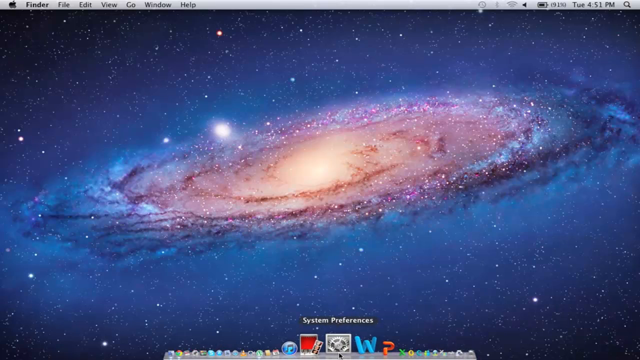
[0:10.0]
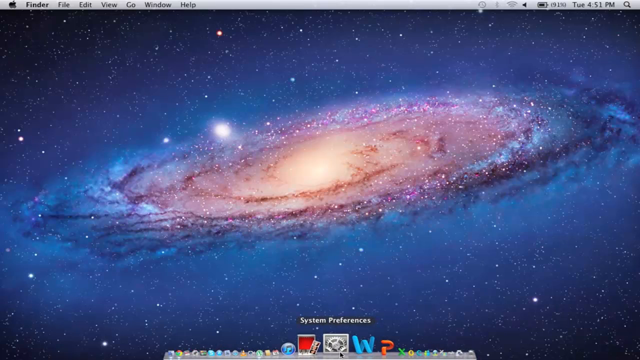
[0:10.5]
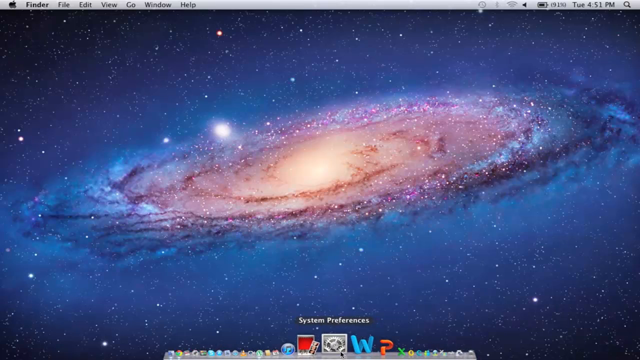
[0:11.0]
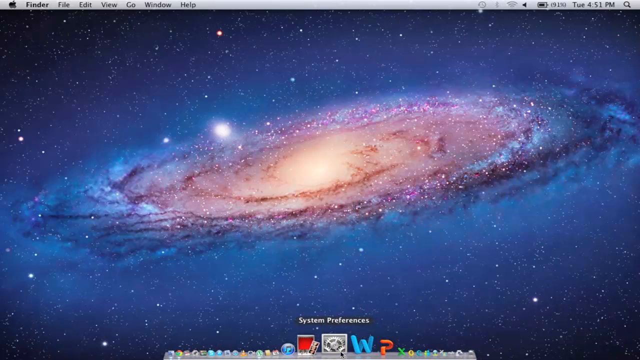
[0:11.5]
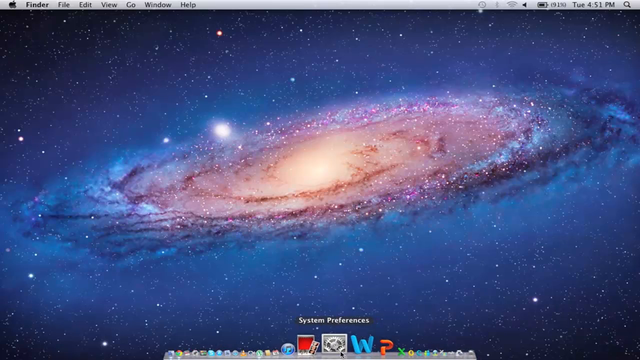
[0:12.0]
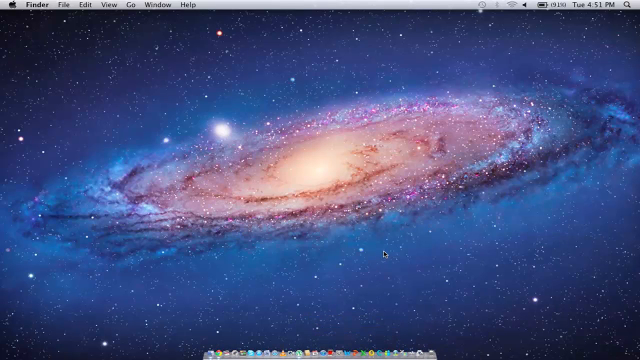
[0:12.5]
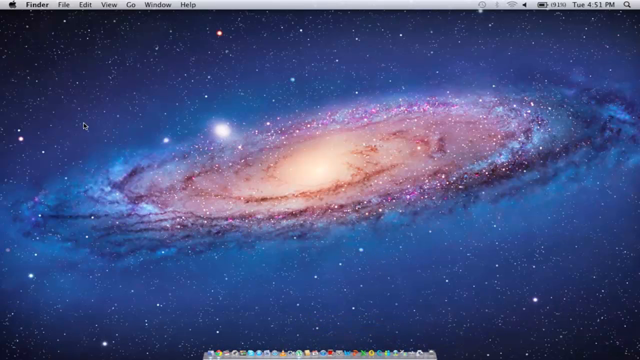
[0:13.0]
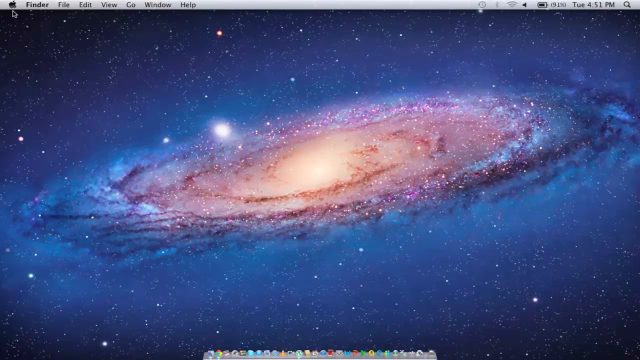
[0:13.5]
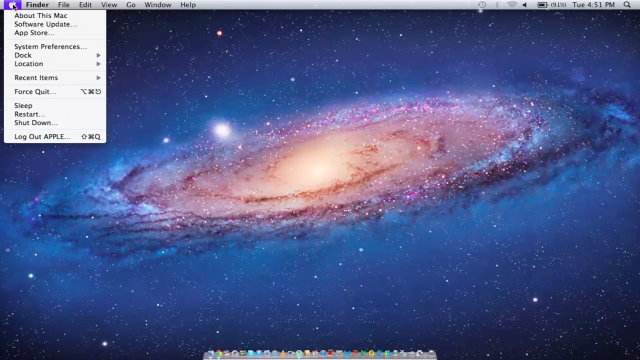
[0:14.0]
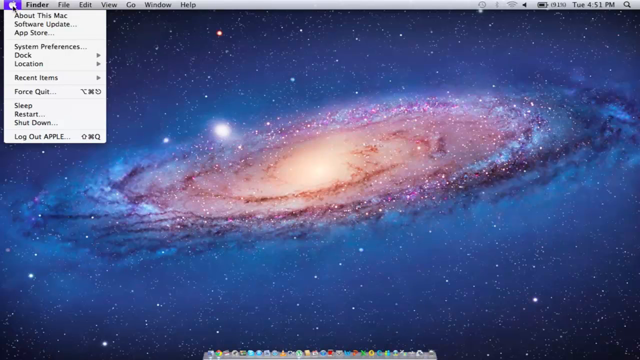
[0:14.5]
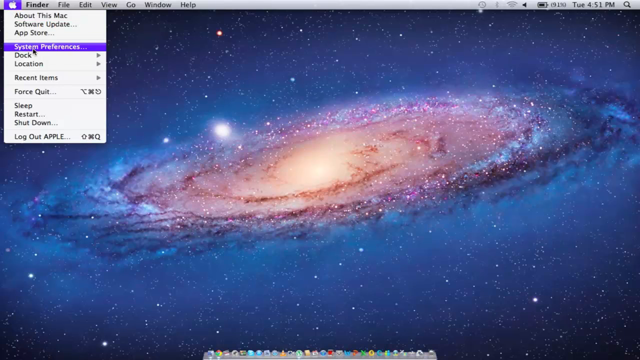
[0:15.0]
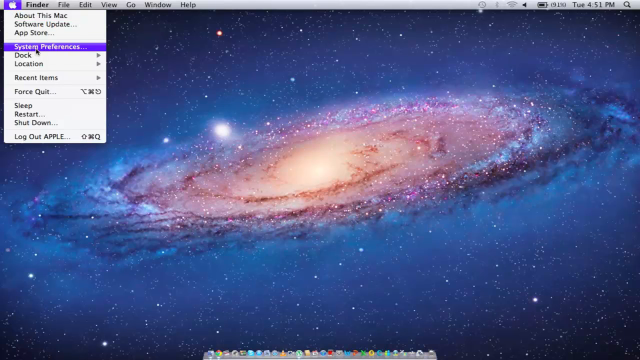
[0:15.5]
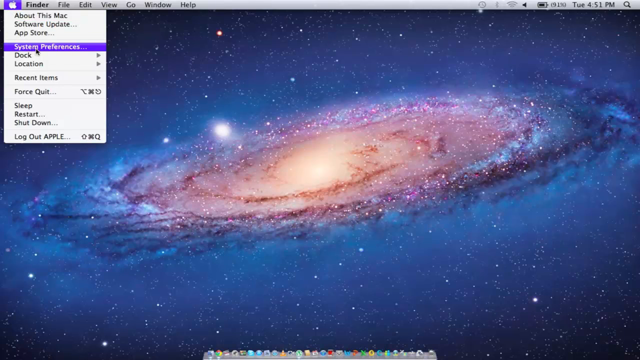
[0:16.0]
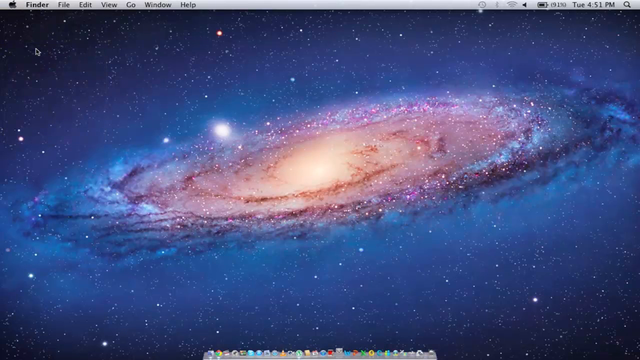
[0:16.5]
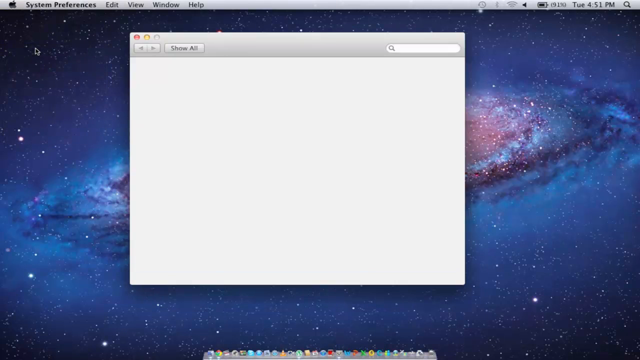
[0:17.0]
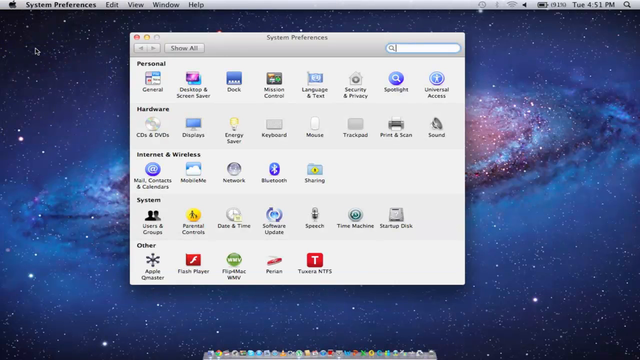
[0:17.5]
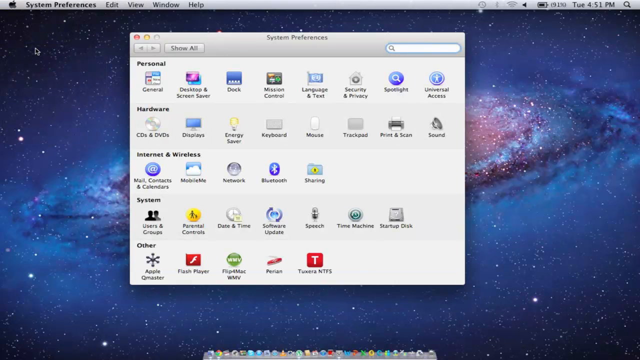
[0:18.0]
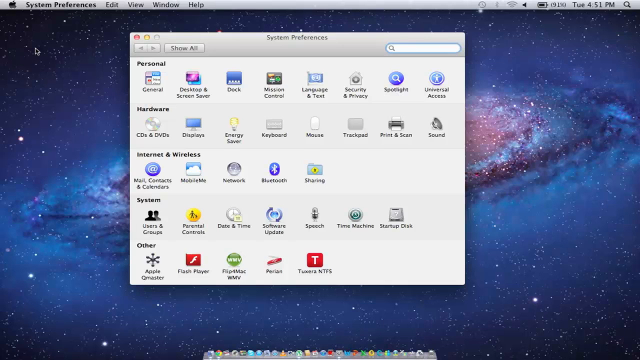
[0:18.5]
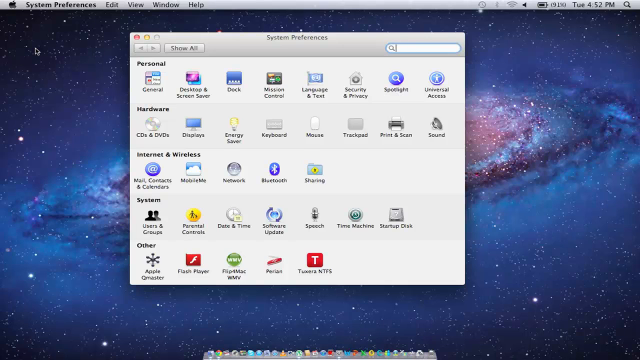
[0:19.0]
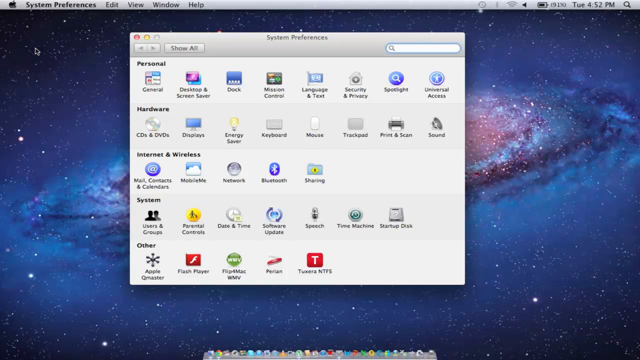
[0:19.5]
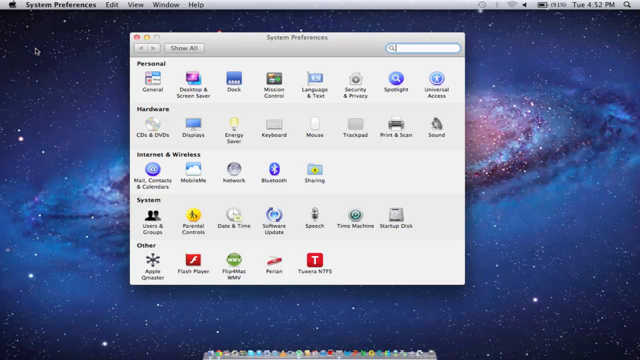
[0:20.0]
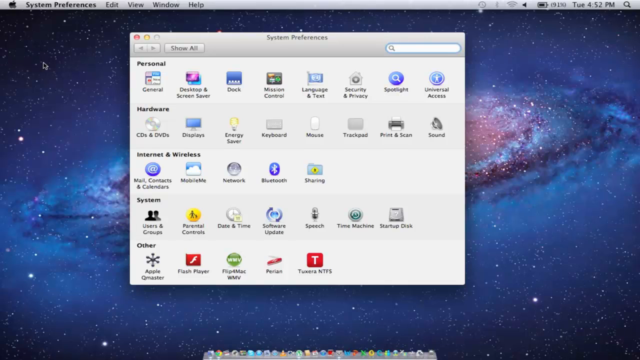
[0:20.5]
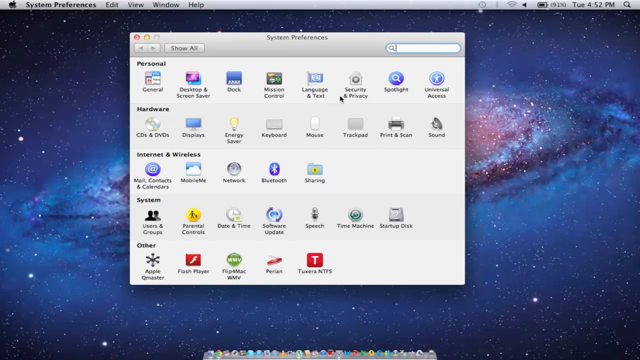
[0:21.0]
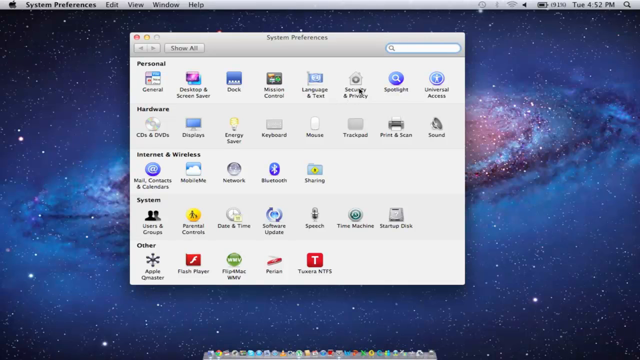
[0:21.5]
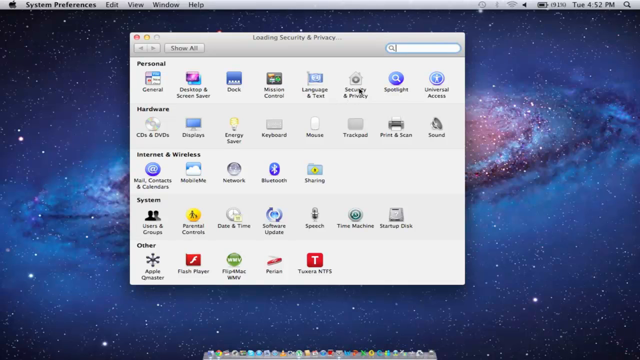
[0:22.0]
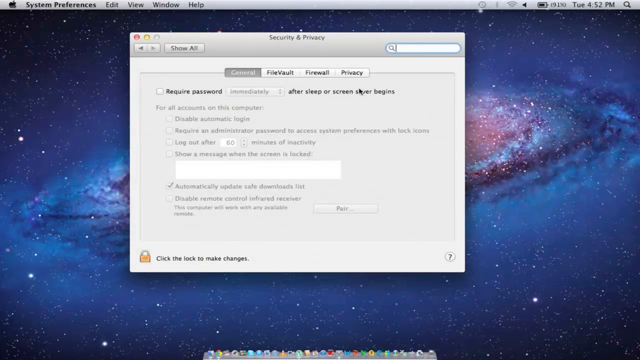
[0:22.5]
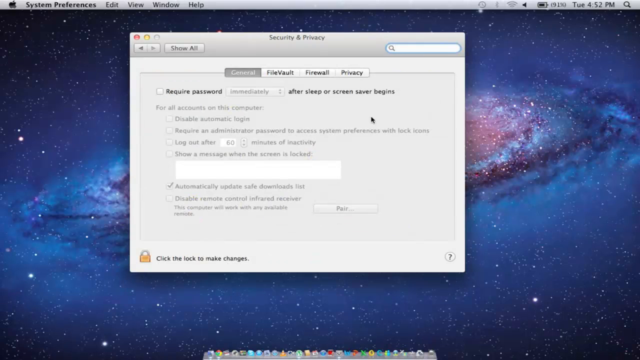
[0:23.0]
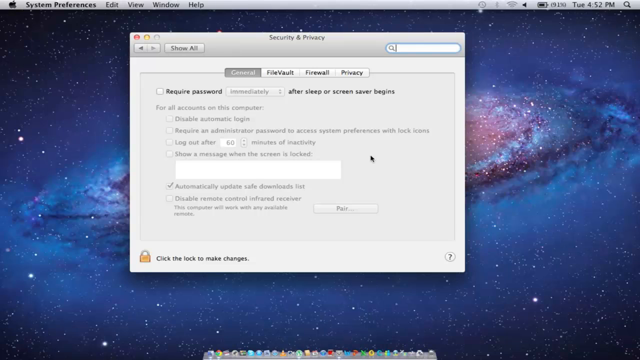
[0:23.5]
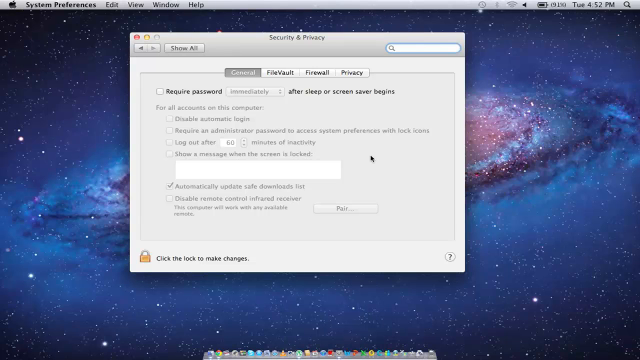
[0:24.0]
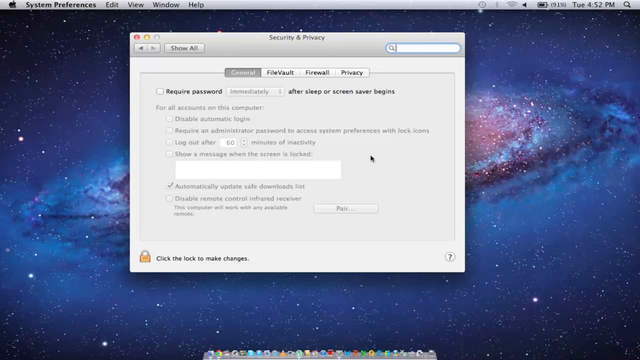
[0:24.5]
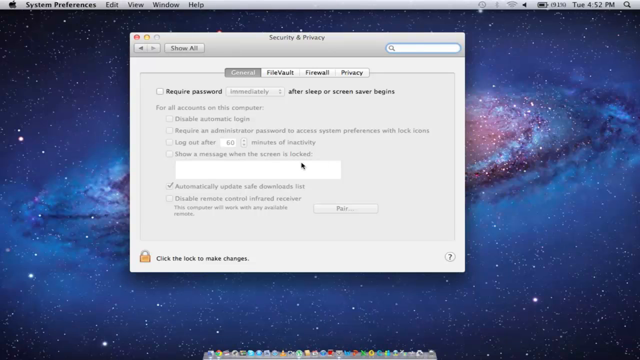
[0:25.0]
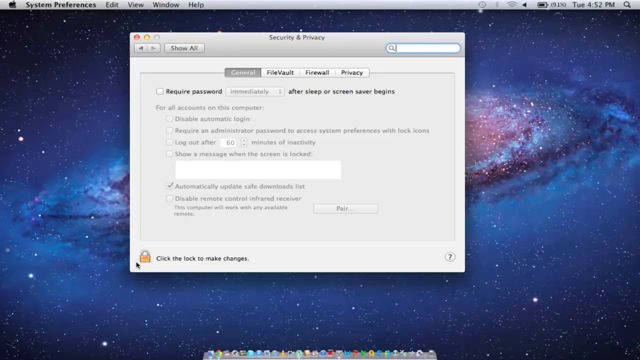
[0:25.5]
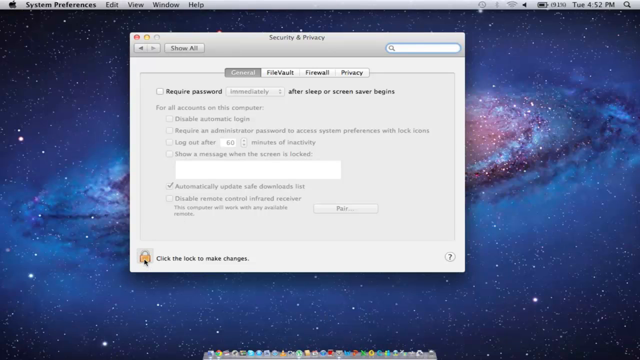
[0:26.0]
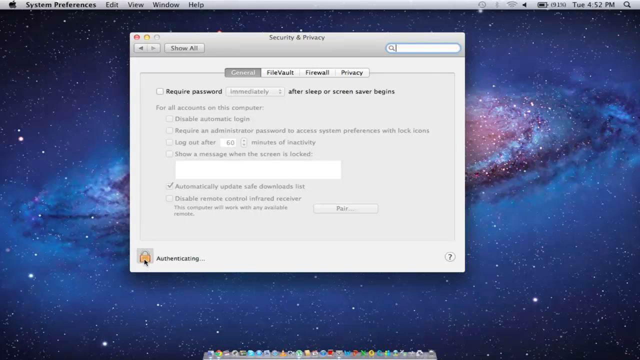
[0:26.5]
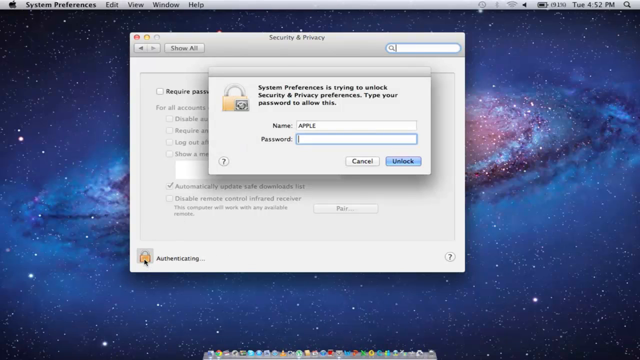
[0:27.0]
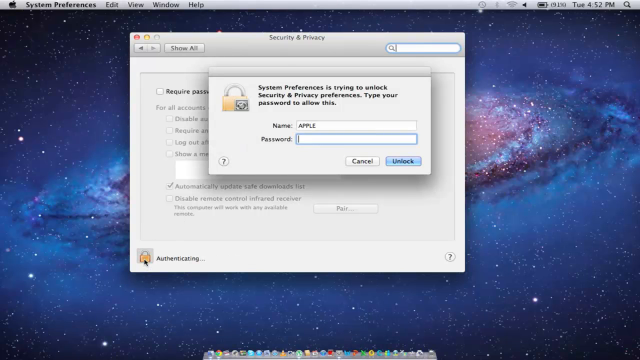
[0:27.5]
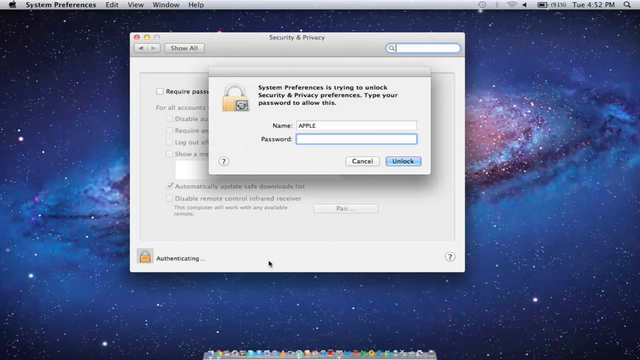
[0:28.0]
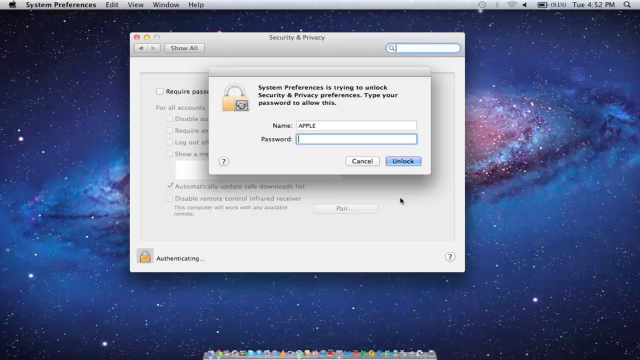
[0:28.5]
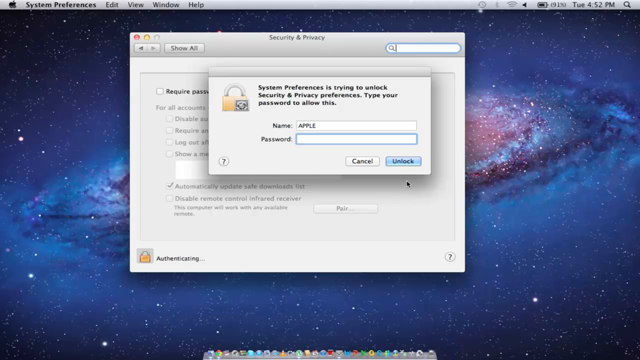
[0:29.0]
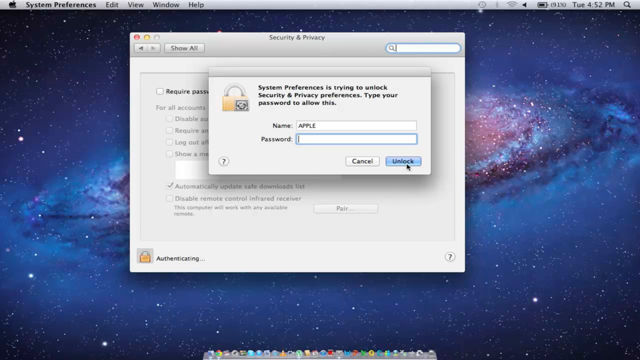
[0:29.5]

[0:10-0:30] The same image continues, and it turns out to be a Windows picture. A click then happens, like someone clicking in a screen recording, and after the click a set of apps is shown. First there is a heading, "personal", with applications listed underneath, then "hardware", then "internet wireless" and "system". It appears to be the settings of the Windows computer desktop, showing all the features in the settings. It then goes to system preferences and shows the features underneath it.